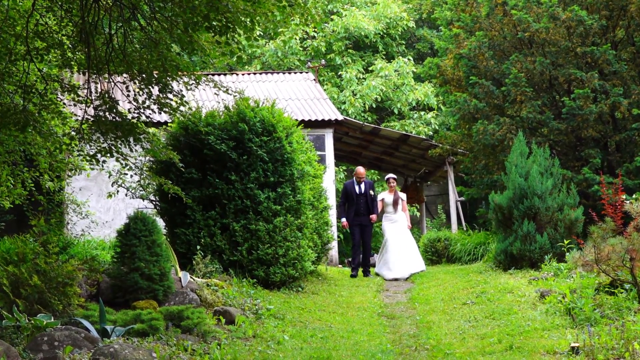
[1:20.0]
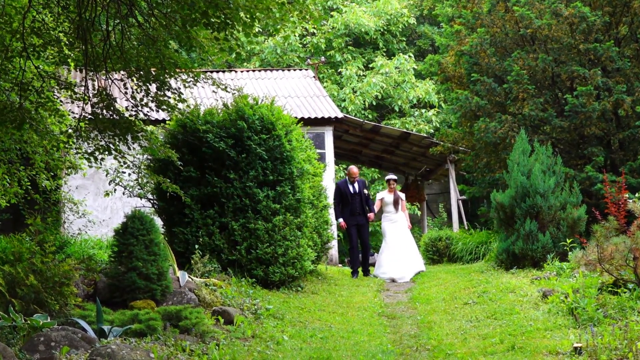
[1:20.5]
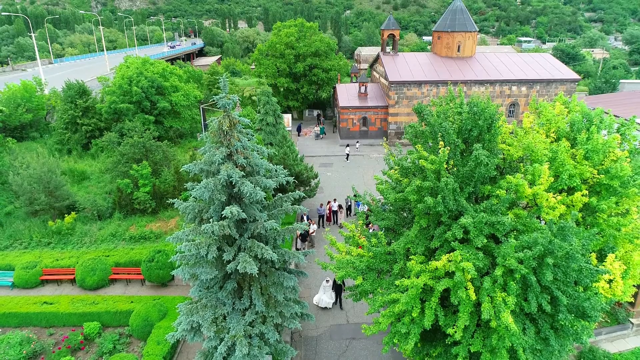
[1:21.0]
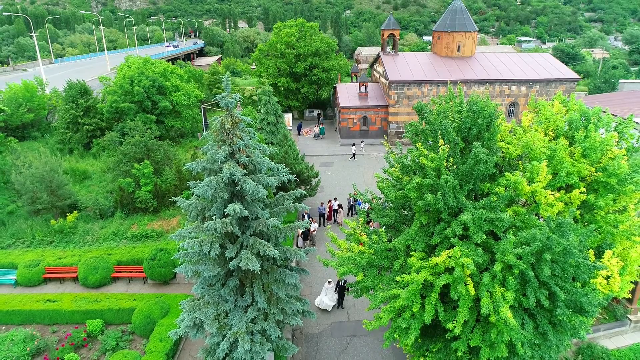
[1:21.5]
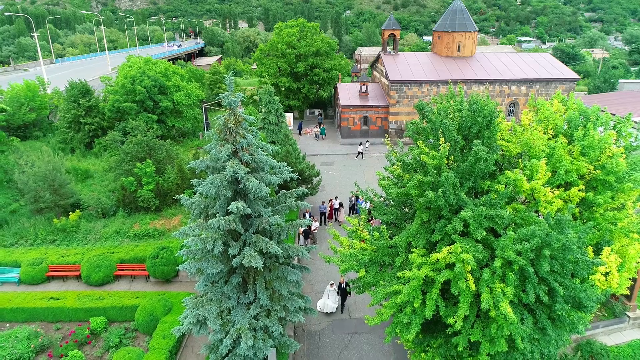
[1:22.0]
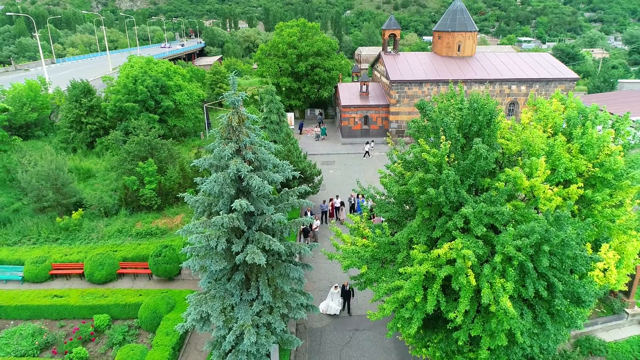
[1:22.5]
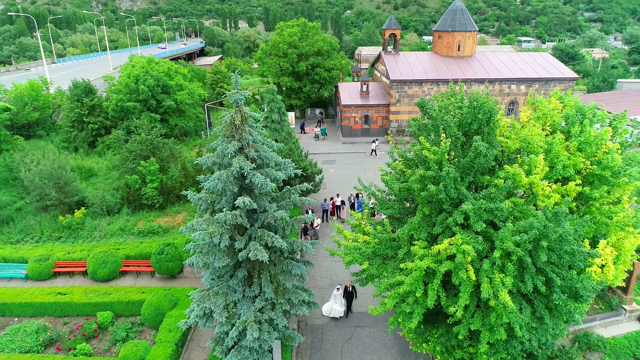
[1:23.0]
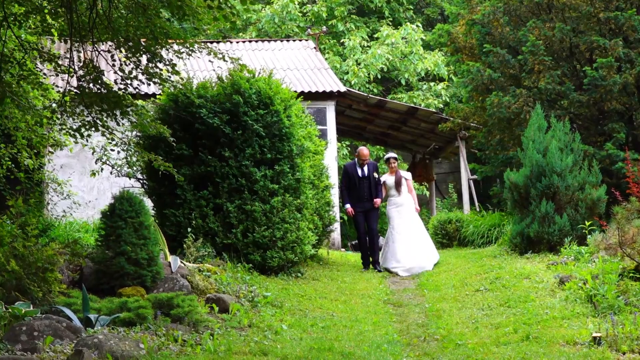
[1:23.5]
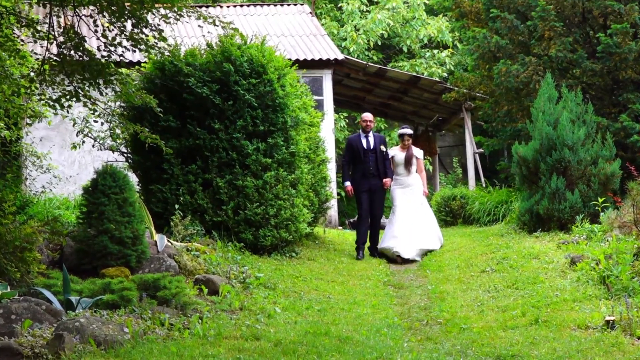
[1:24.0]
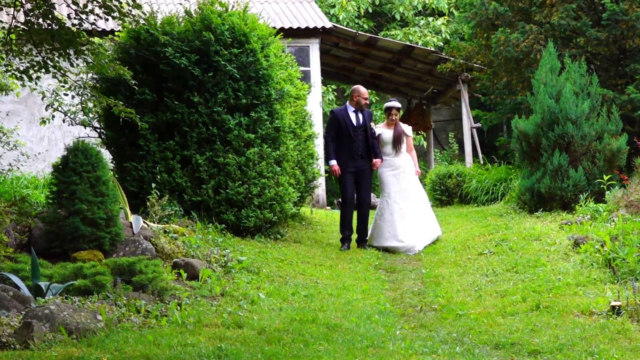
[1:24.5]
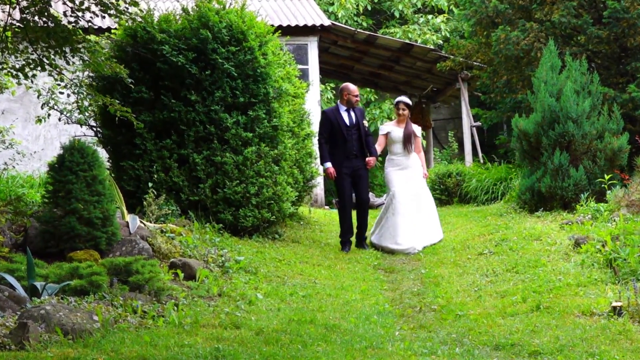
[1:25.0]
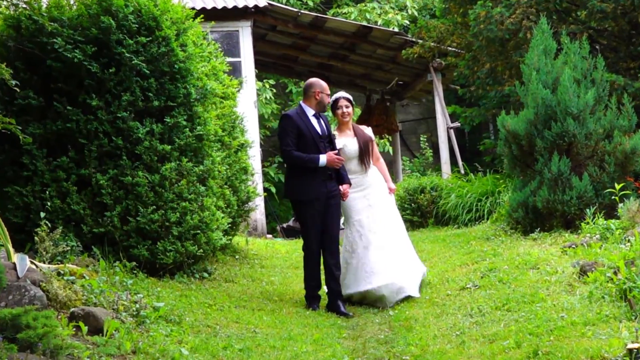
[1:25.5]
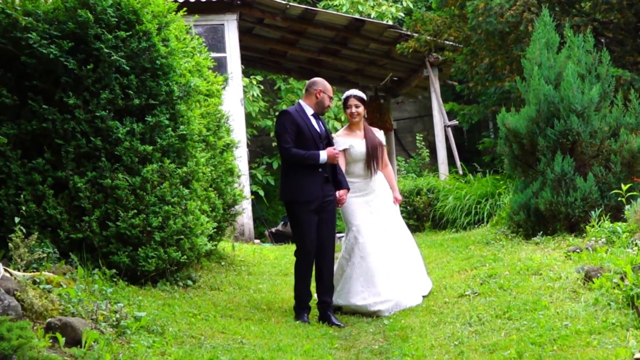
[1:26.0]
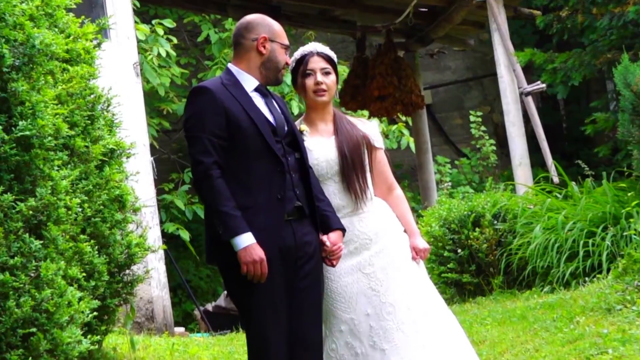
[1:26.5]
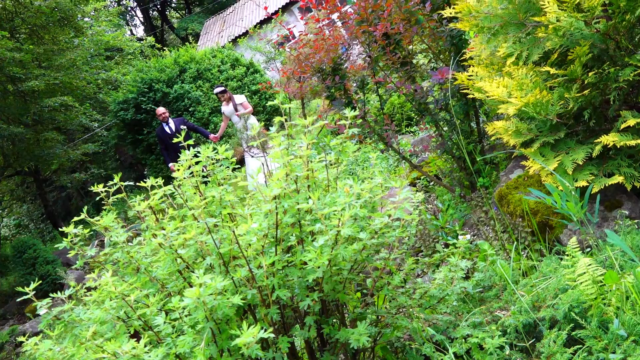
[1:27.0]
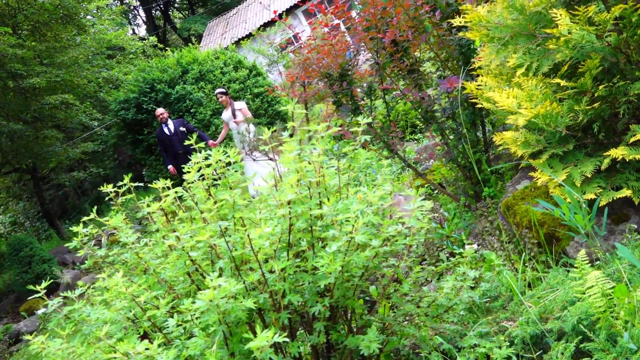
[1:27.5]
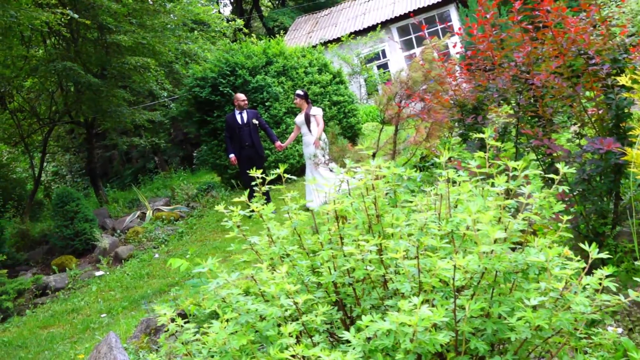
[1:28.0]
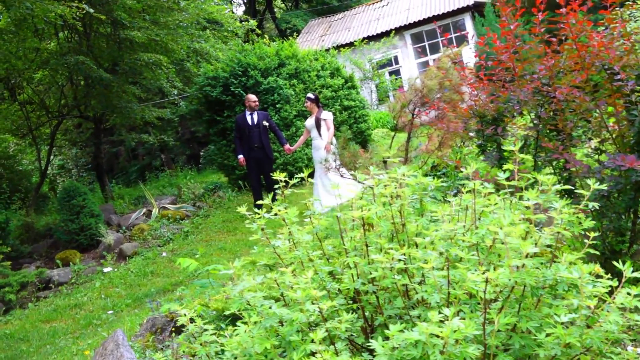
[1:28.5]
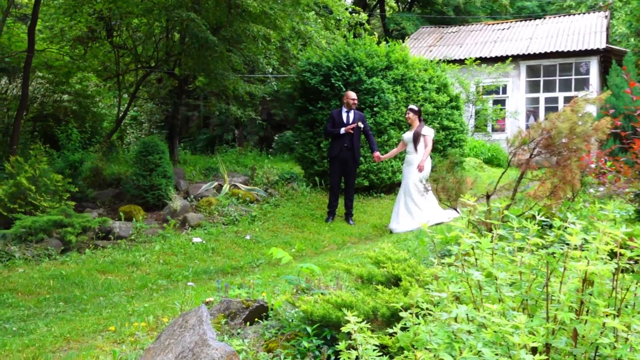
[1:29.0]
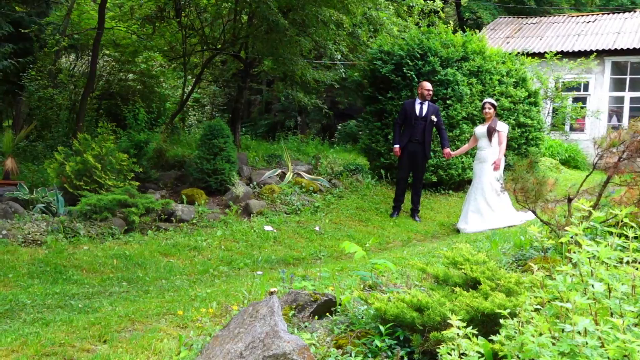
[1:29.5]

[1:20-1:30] Two people are on a small path, holding hands and taking pictures; they seem to be posing while video or pictures are captured.